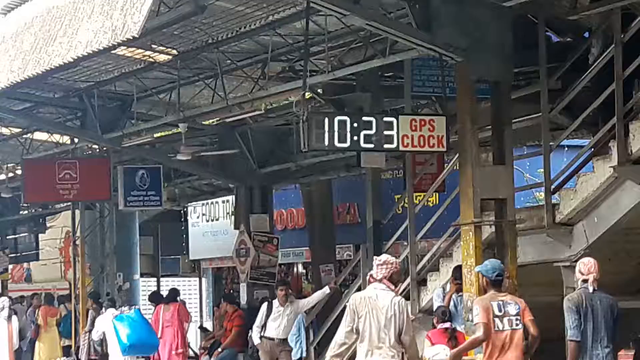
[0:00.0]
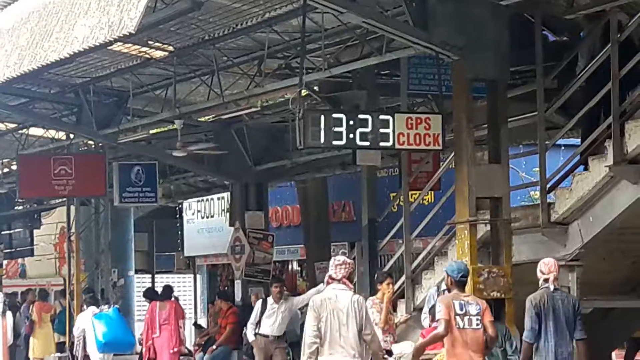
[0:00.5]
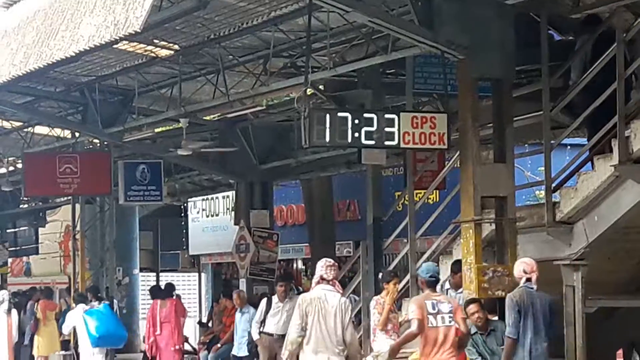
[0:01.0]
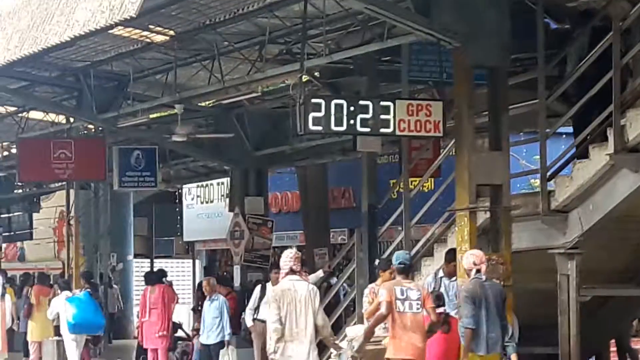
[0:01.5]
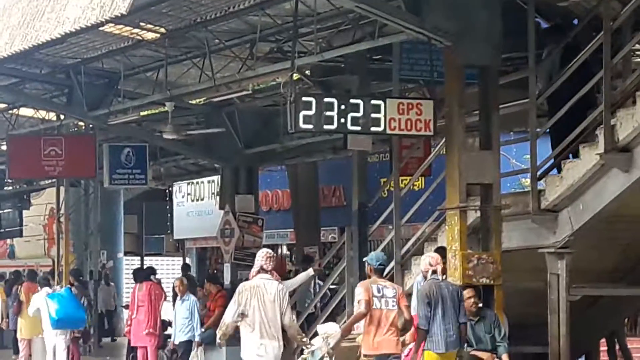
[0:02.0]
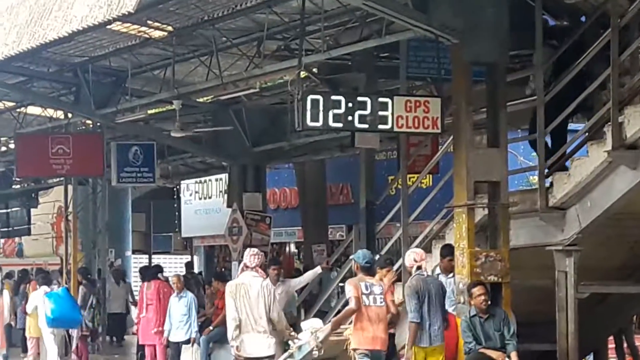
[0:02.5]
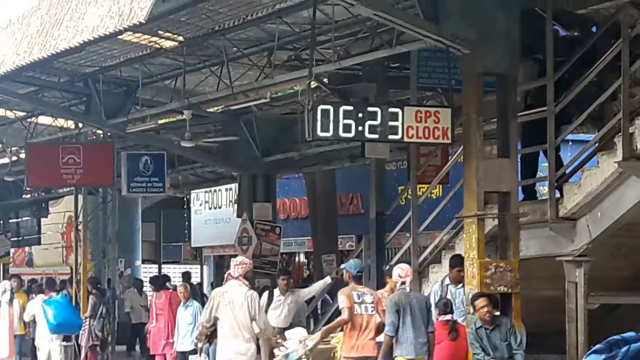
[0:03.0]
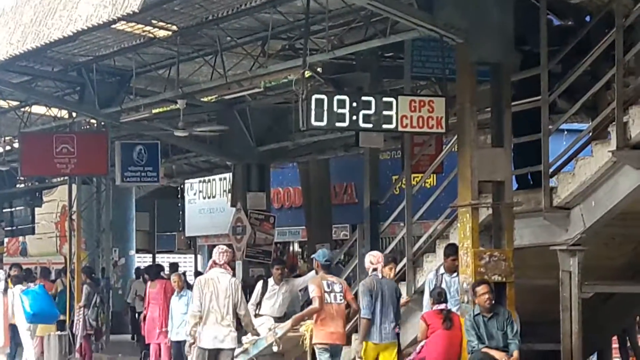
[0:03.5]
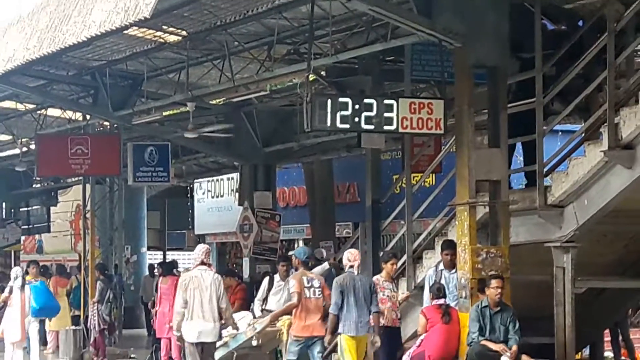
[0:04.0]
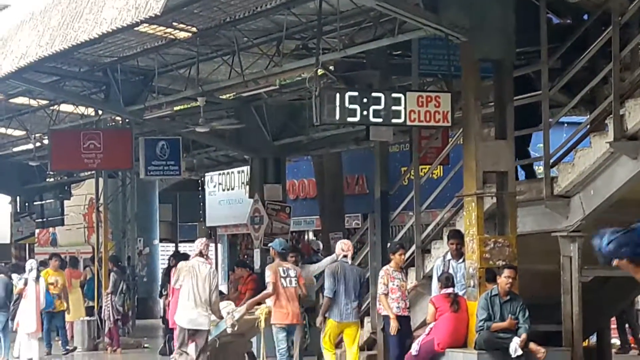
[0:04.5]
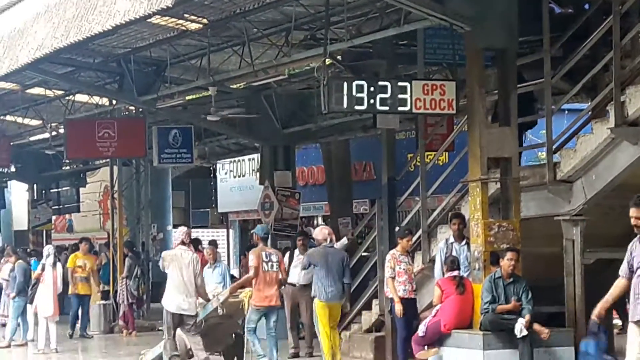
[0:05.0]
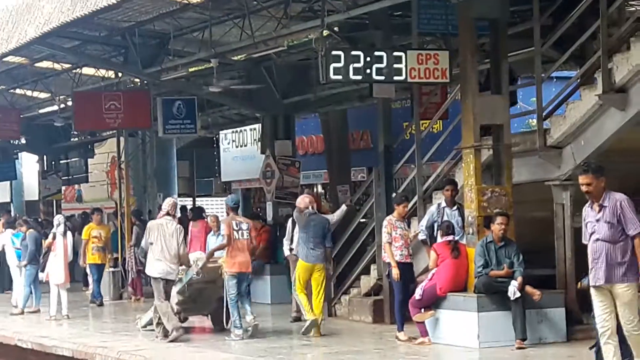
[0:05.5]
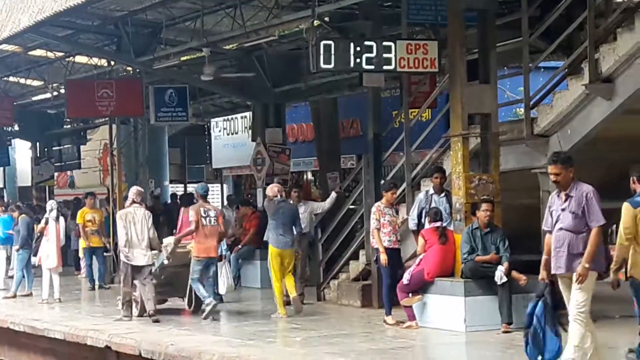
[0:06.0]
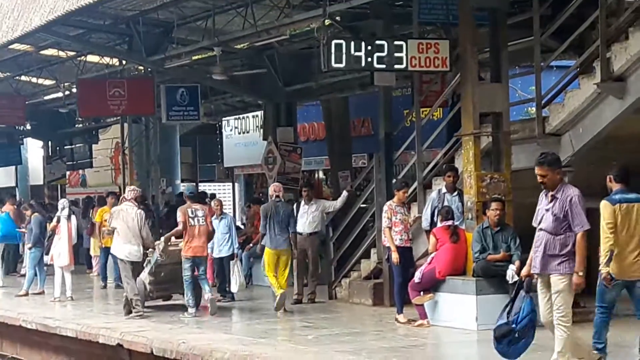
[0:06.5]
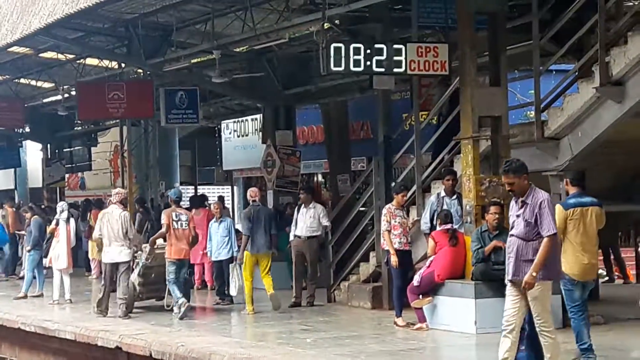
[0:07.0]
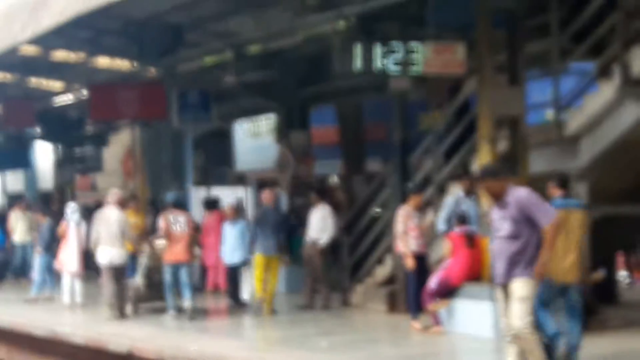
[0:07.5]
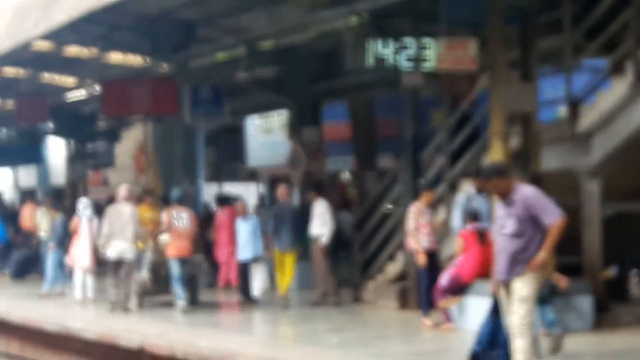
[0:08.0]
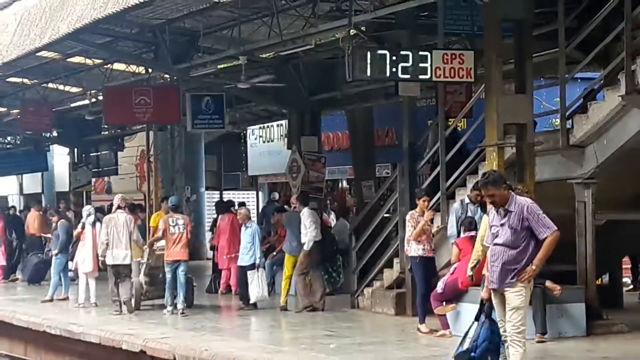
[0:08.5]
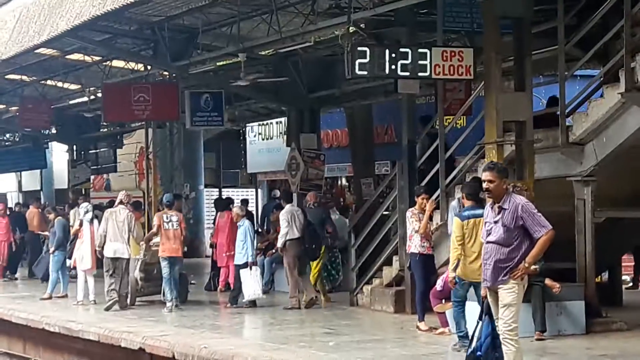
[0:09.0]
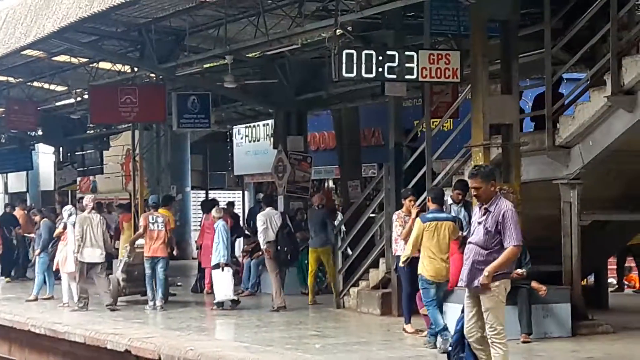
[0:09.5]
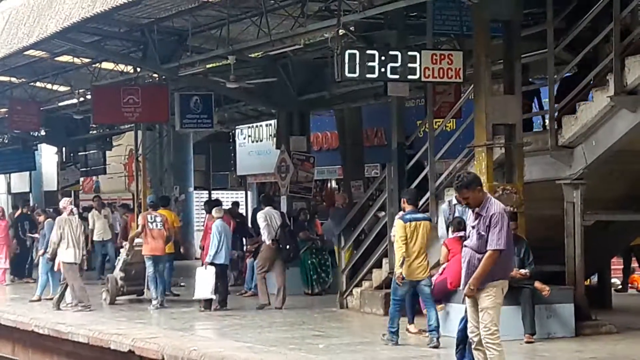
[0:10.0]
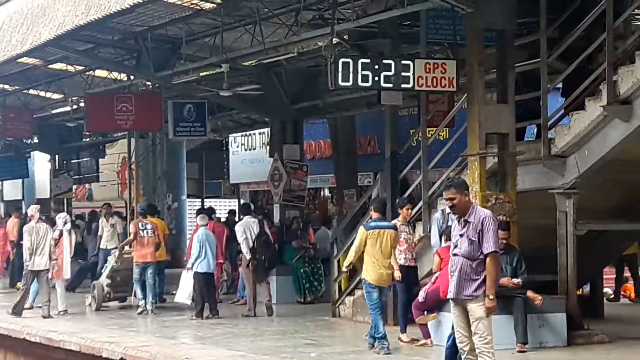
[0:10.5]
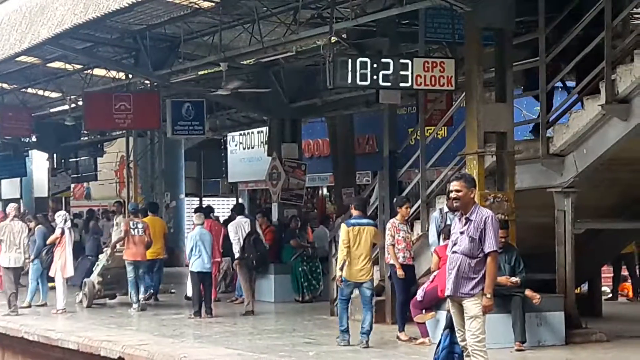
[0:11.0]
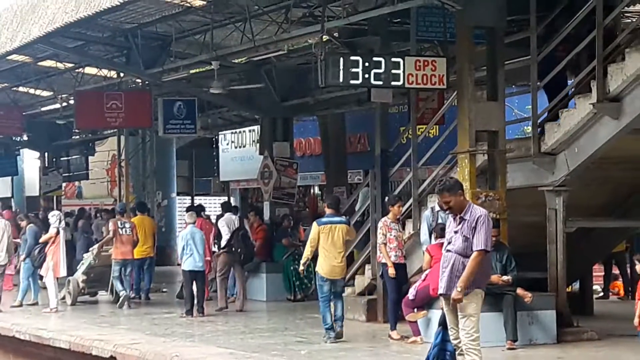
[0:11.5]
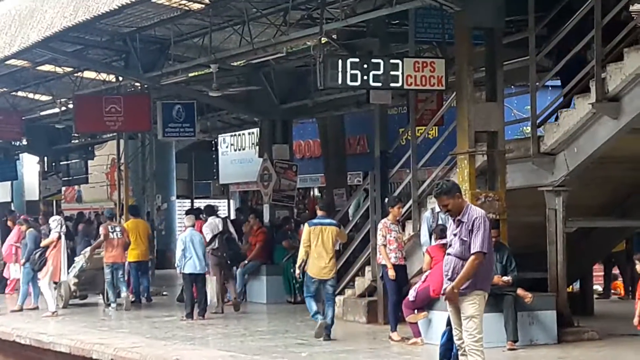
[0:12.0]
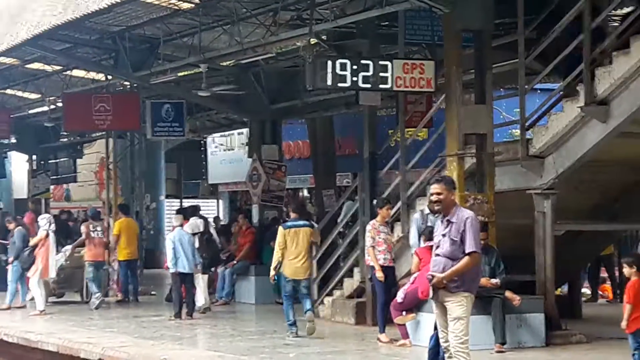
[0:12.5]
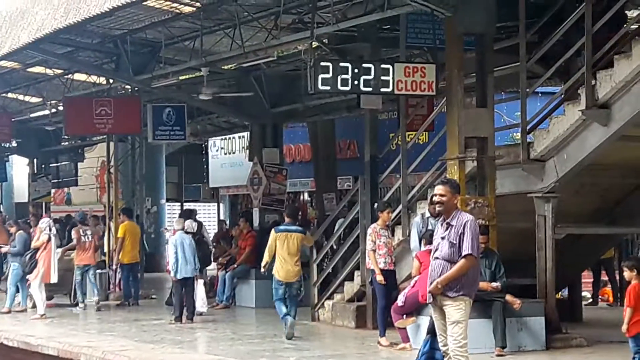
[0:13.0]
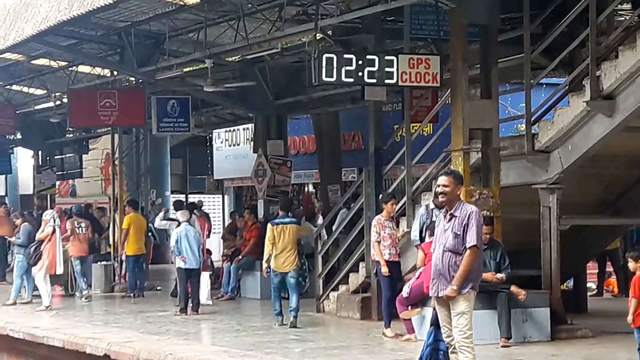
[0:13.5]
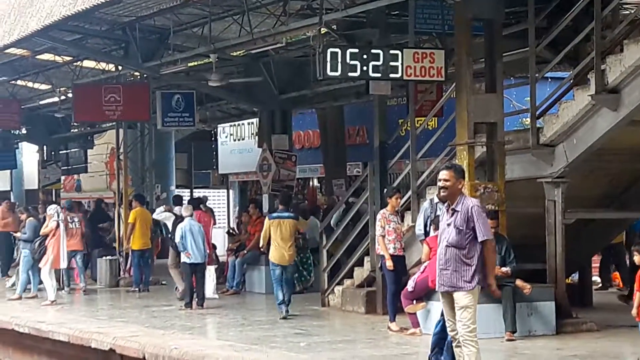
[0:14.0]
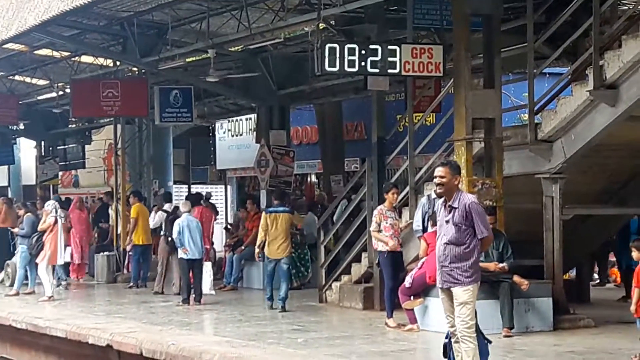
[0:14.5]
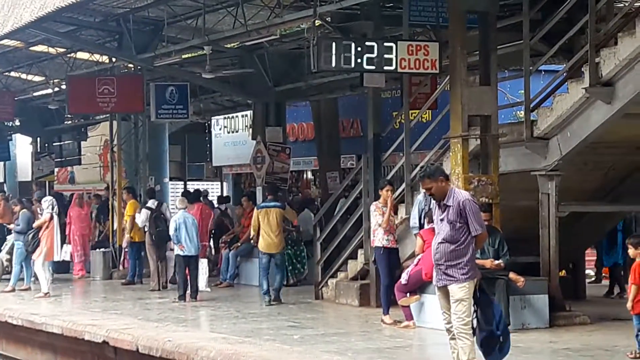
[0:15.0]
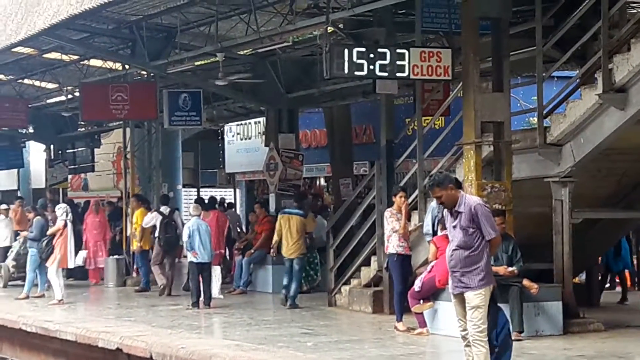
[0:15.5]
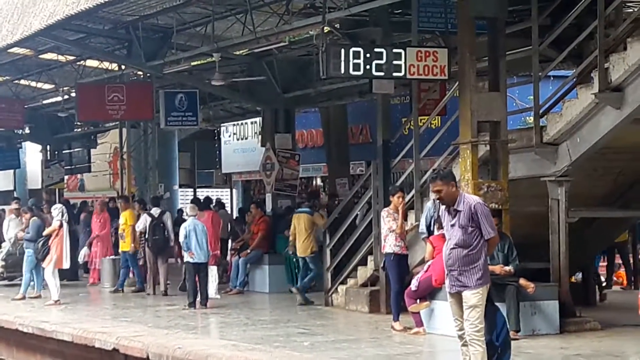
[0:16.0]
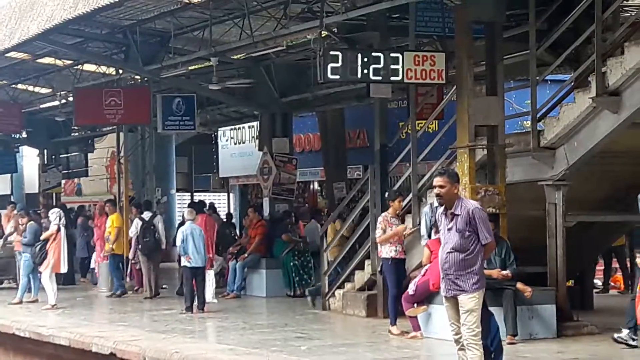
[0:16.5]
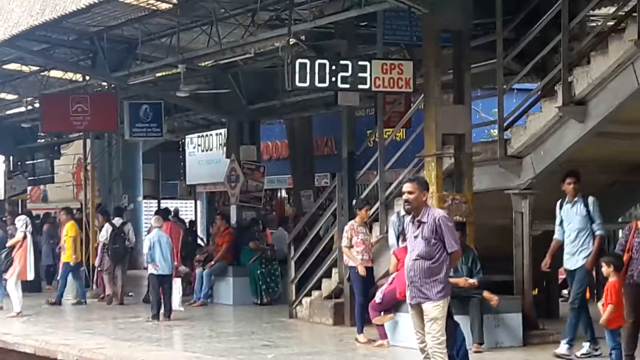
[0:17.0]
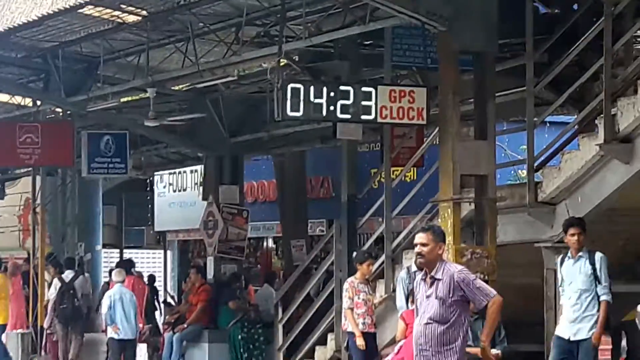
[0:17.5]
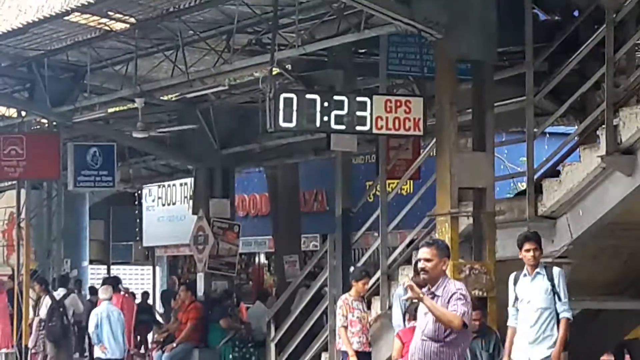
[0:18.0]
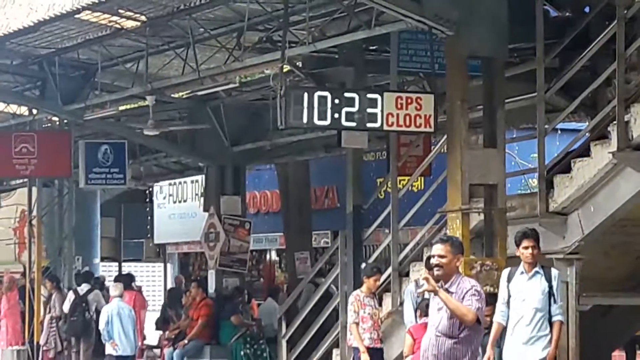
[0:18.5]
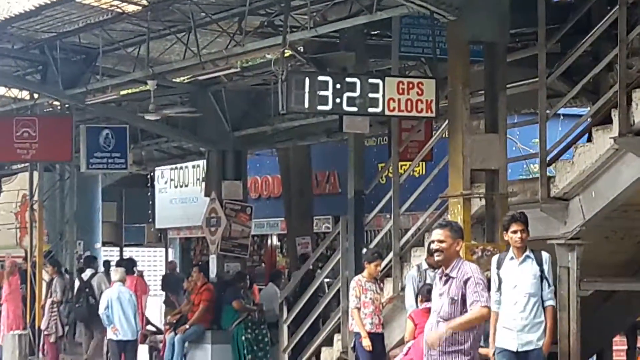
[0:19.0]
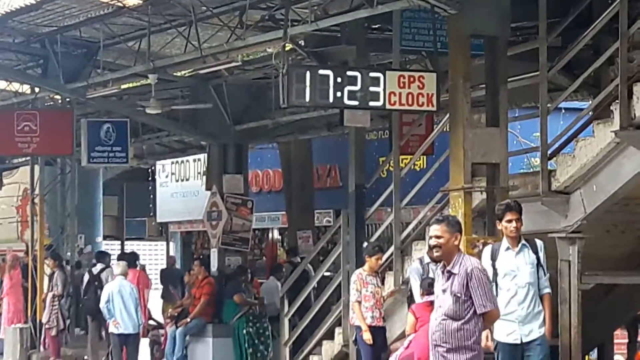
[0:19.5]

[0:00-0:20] What looks like a GPS clock keeps changing its numbers, counting up at intervals. Multiple people seem to be moving around, and there appear to be some shops. The place looks almost like a train station, with a staircase and people apparently waiting for an incoming train. Some people move carts, while others wait with their purses or sit around. The GPS clock appears to be the focal point of the video: the minutes are stuck on 23, while the hour digits keep changing from 1 to 23, quite fast, almost like a broken clock.